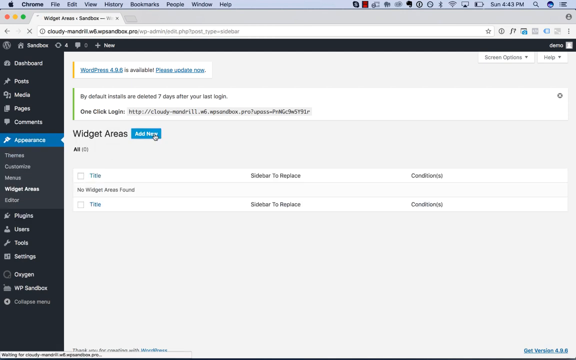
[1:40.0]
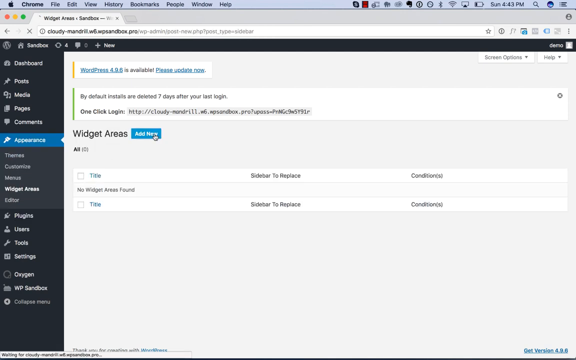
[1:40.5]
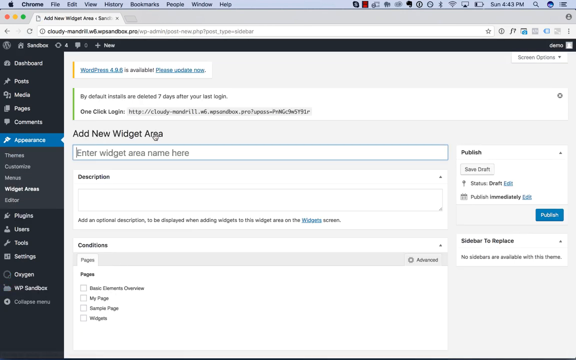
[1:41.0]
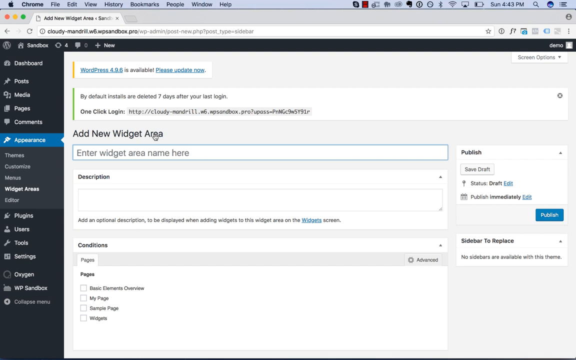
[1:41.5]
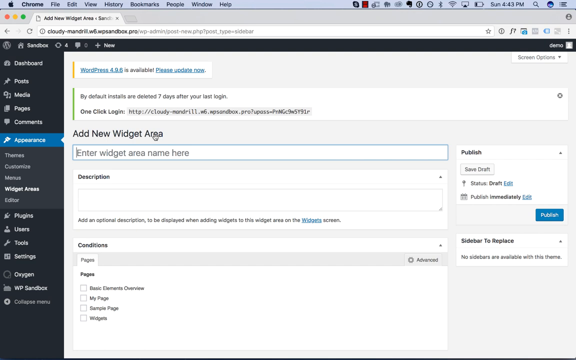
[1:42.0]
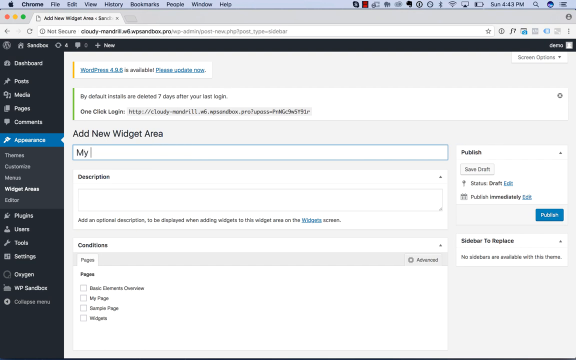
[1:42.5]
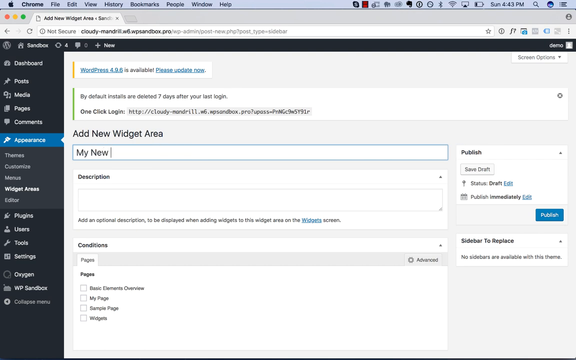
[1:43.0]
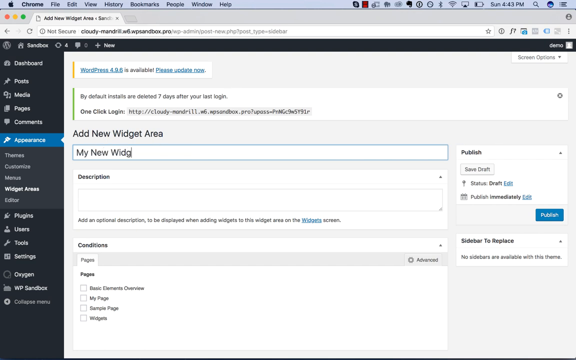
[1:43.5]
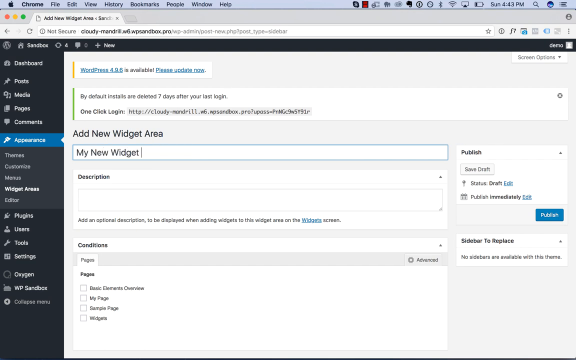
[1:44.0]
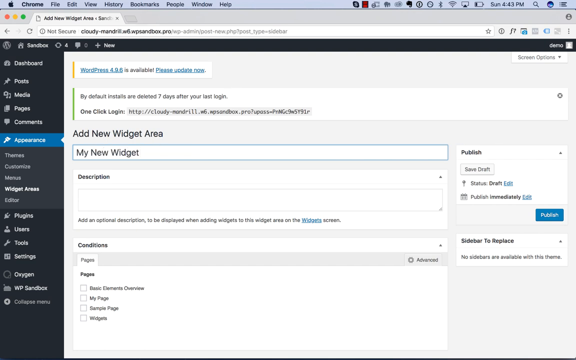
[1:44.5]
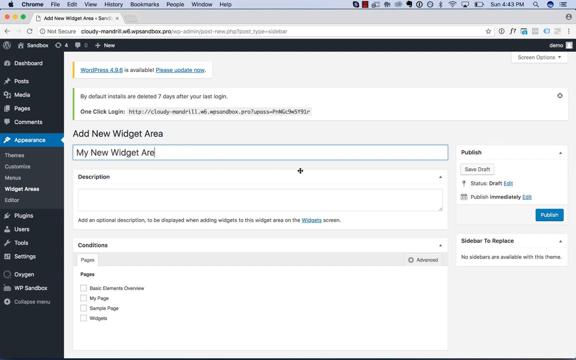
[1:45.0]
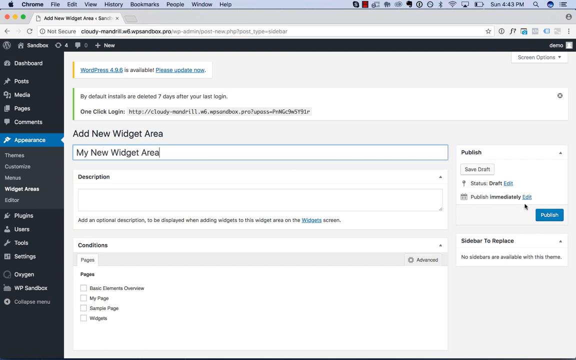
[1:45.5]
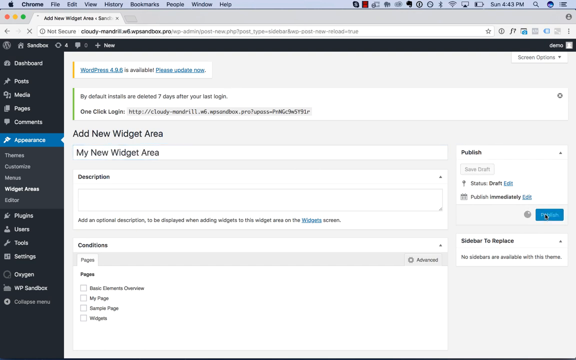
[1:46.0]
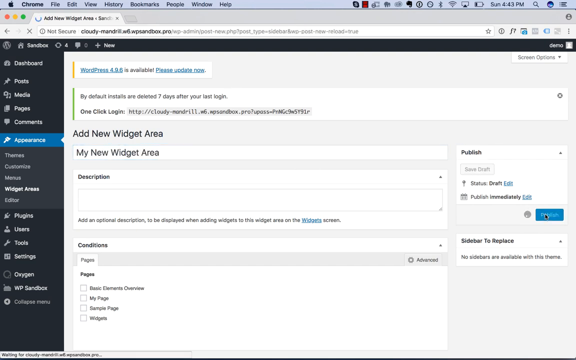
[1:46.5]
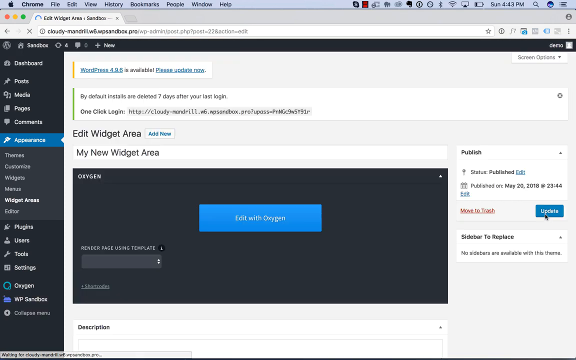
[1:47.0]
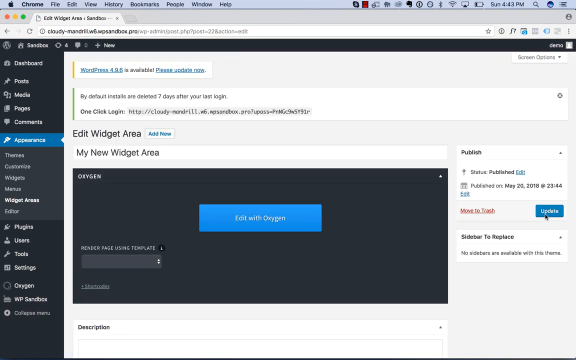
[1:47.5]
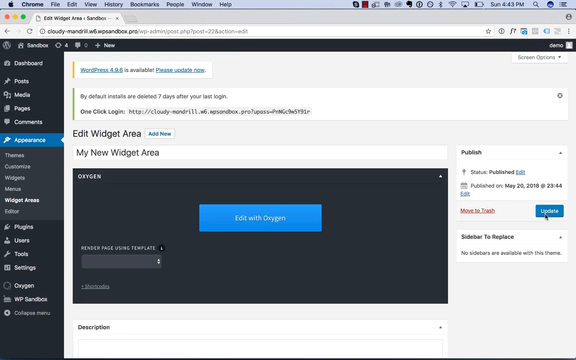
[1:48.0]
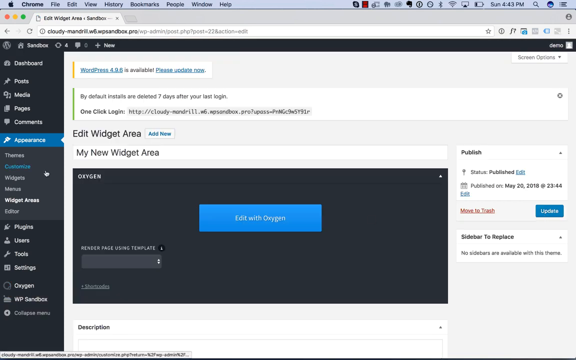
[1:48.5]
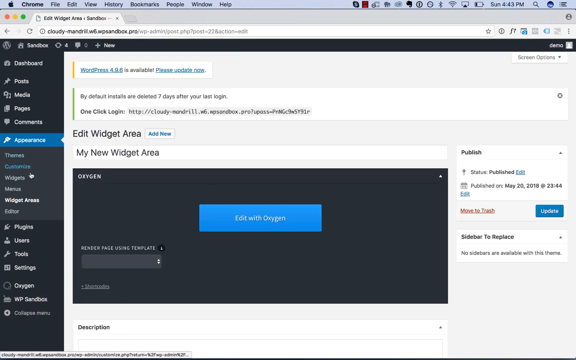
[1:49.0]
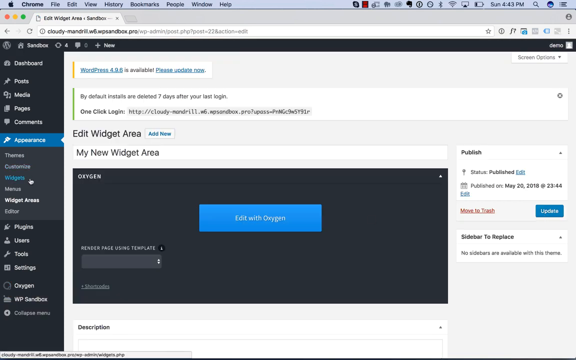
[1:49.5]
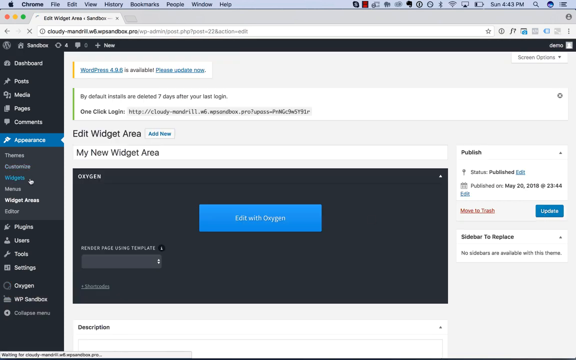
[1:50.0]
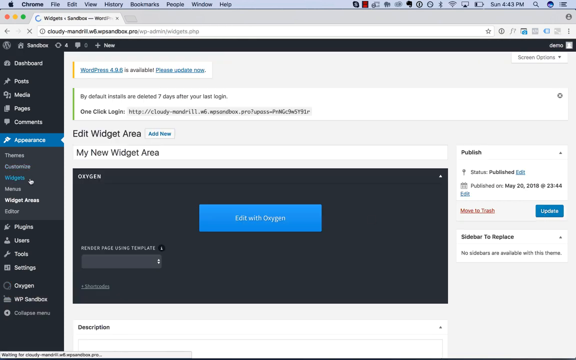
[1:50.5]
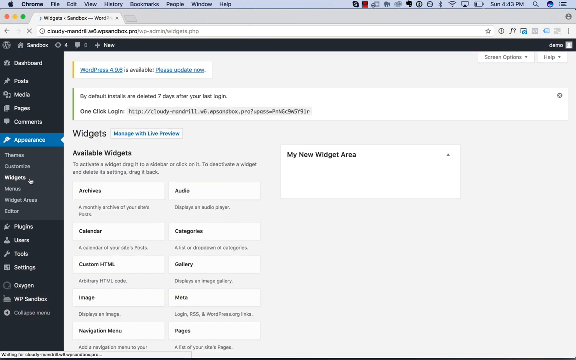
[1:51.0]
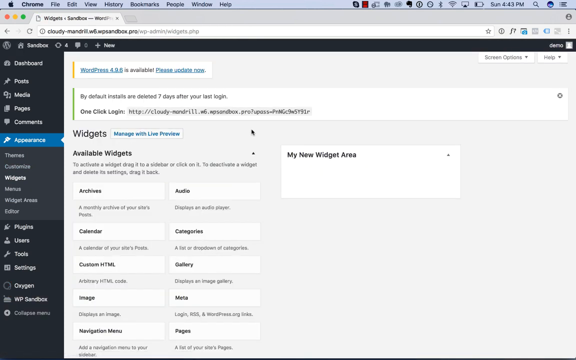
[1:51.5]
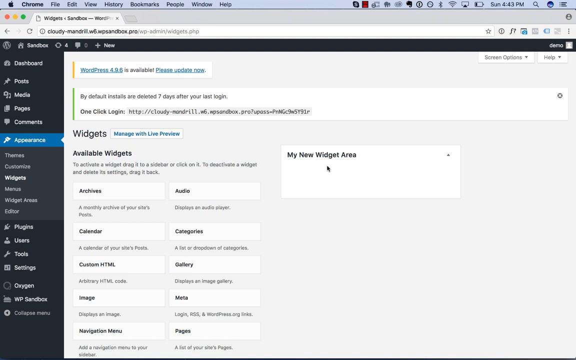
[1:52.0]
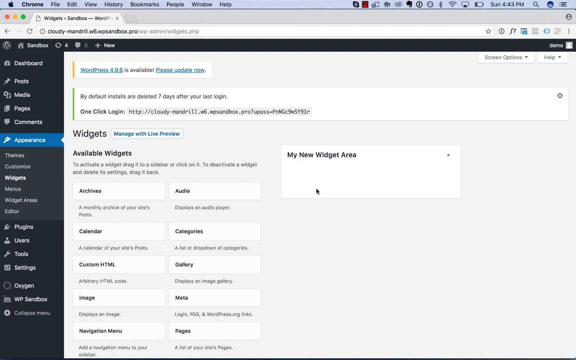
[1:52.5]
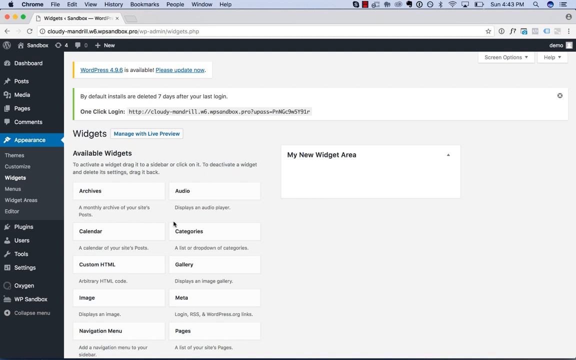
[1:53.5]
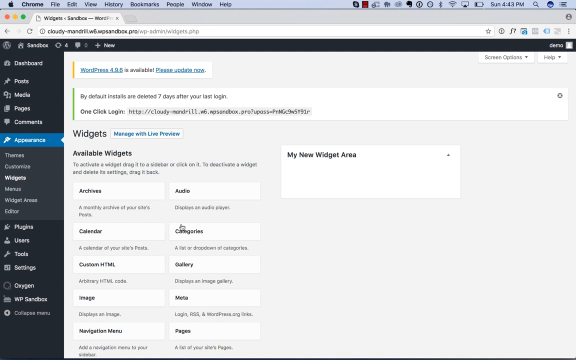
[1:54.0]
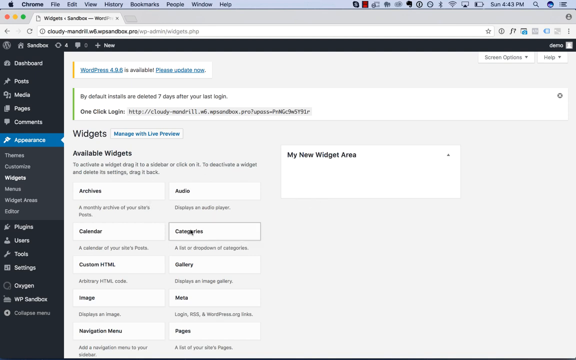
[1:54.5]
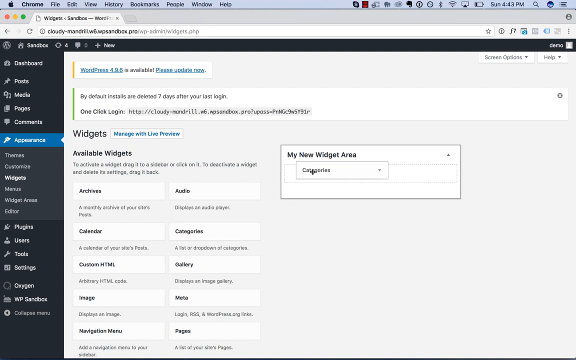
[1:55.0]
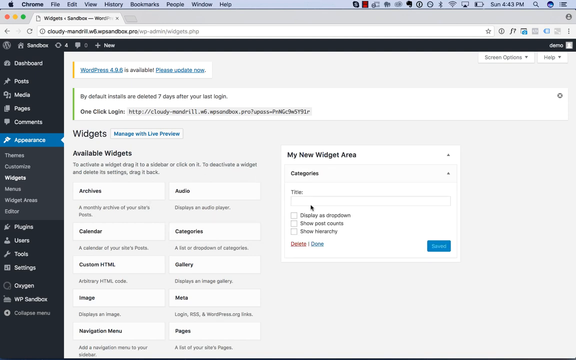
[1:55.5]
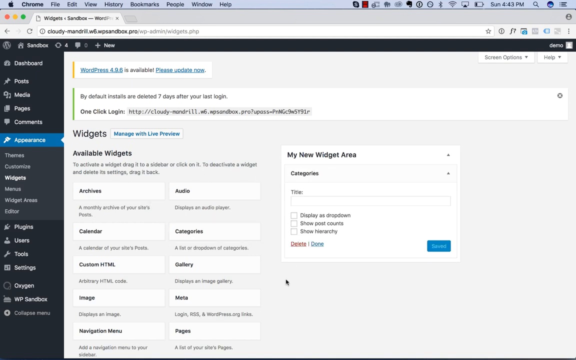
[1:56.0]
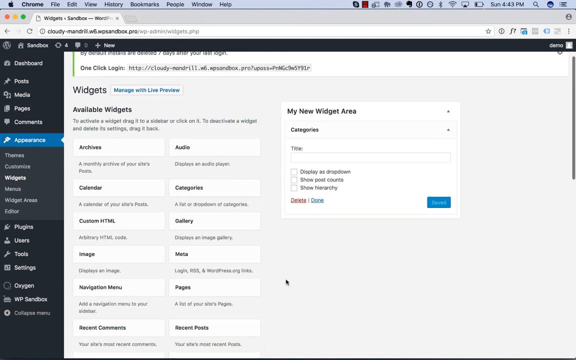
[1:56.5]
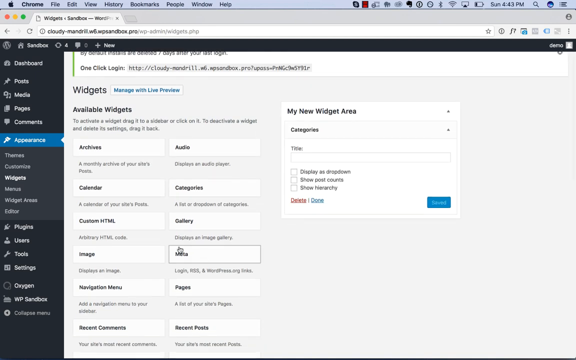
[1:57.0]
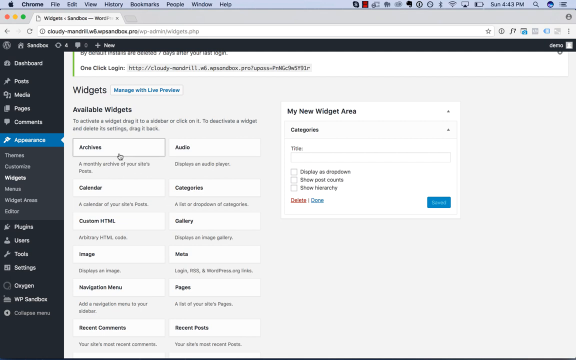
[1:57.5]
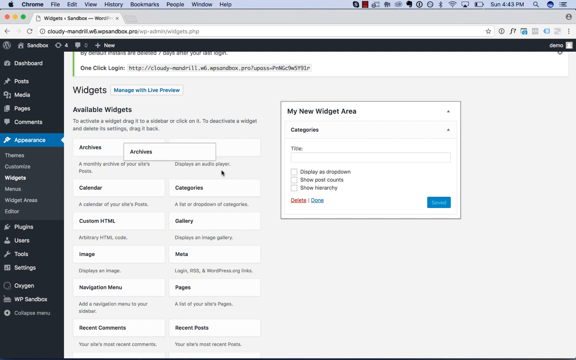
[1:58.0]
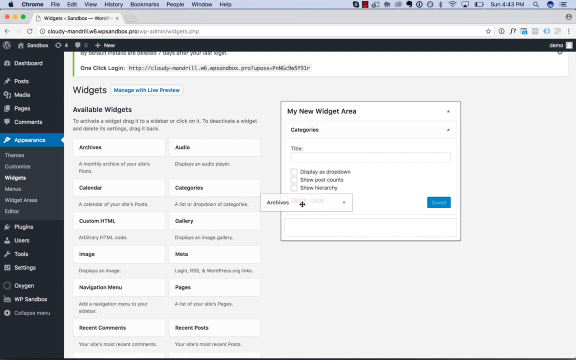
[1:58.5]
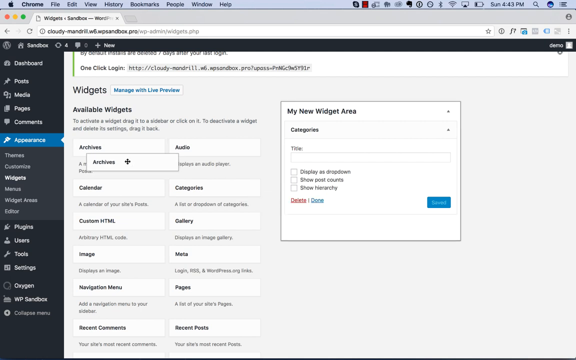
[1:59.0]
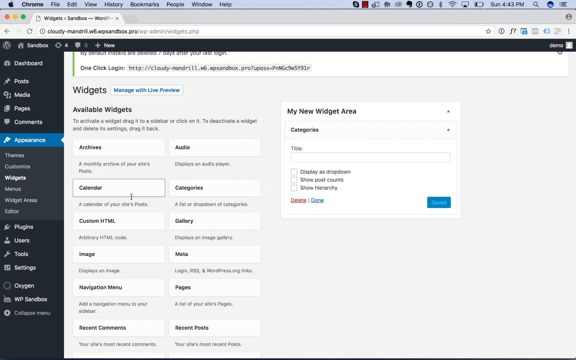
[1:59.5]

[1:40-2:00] On the Mac desktop, Chrome has a tab open to Oxygen Visual Editor, where the user is setting up a WordPress site and adding widgets, having already added WooSidebars. In Appearance, Widget Areas, they click Add New, and a field reading "Enter Widget Name here" appears. They type the name My New Widget Area and publish it, and the new widget area pops up with an option to edit it with Oxygen. They go back to Appearance, then Widgets, where the new widget area appears, and drag Categories from the left into the new widget area on the right, looking for where else they can drag items.